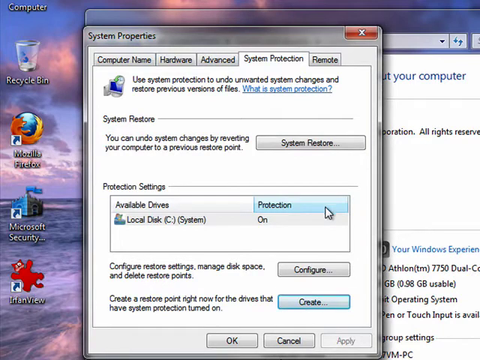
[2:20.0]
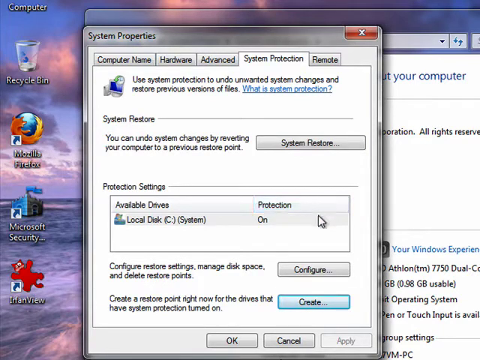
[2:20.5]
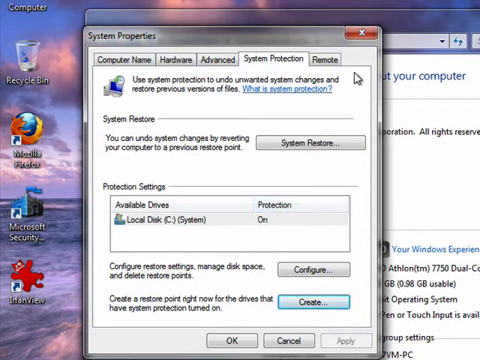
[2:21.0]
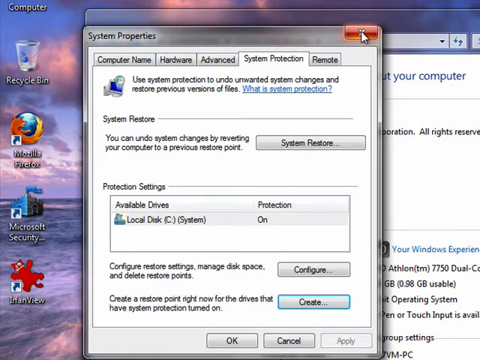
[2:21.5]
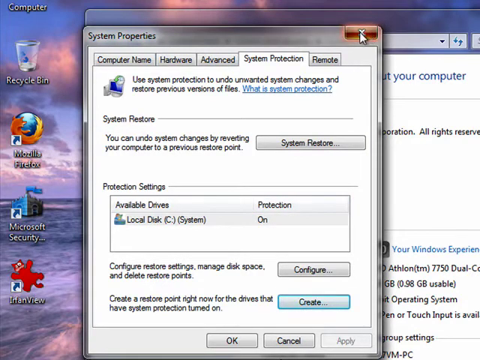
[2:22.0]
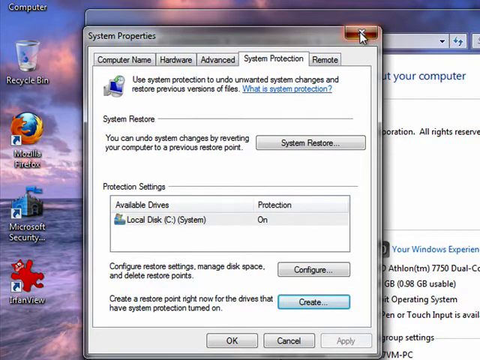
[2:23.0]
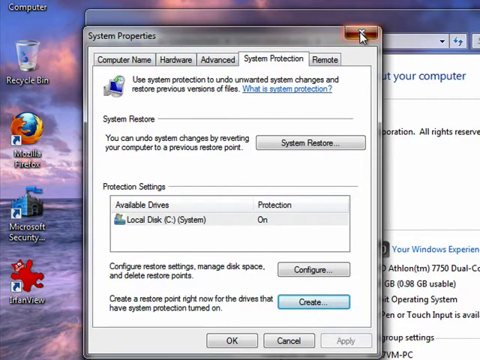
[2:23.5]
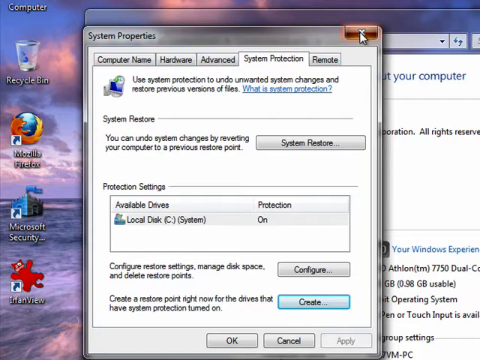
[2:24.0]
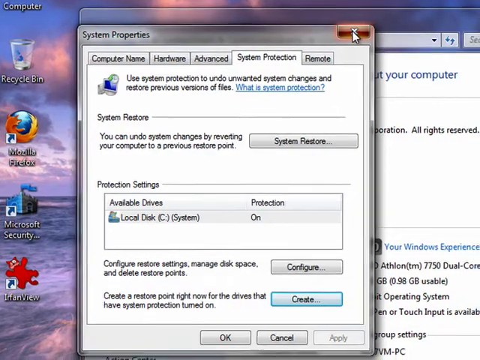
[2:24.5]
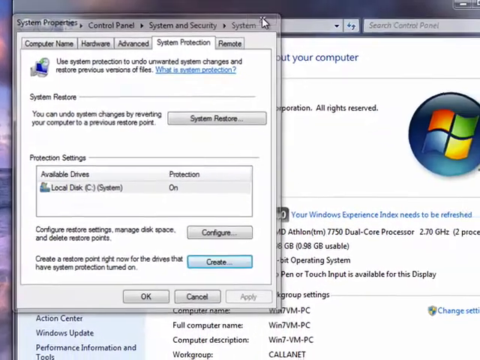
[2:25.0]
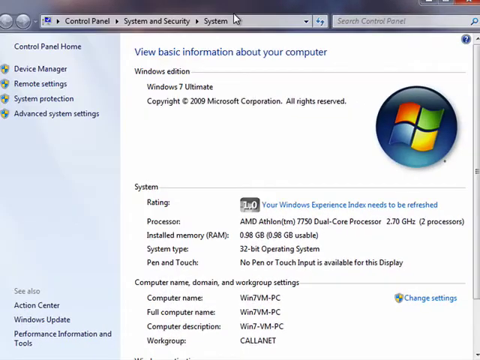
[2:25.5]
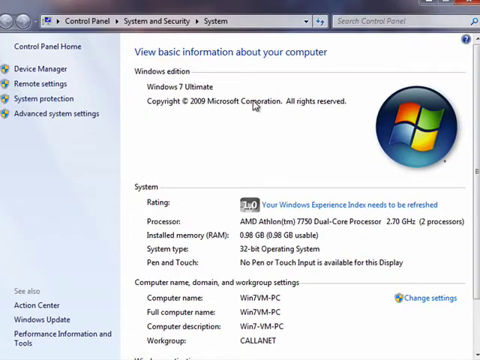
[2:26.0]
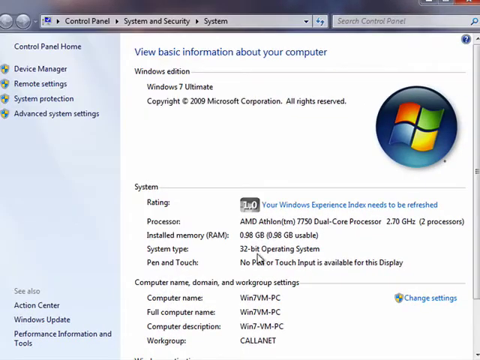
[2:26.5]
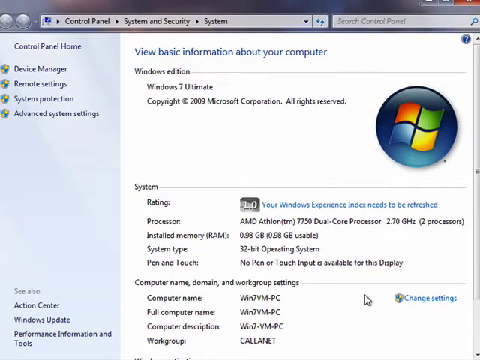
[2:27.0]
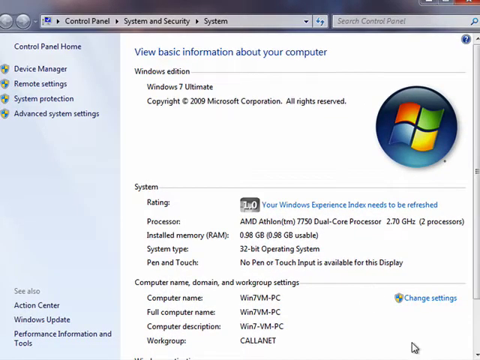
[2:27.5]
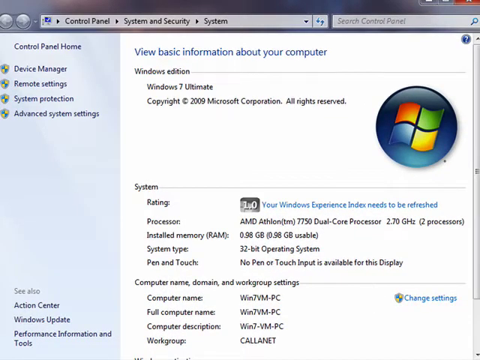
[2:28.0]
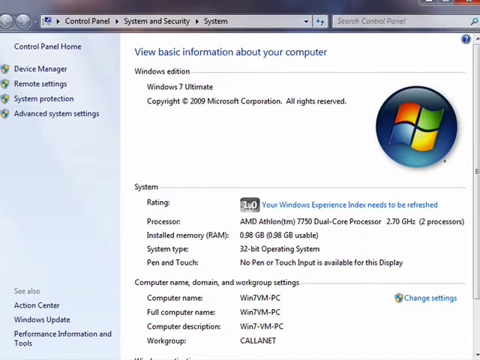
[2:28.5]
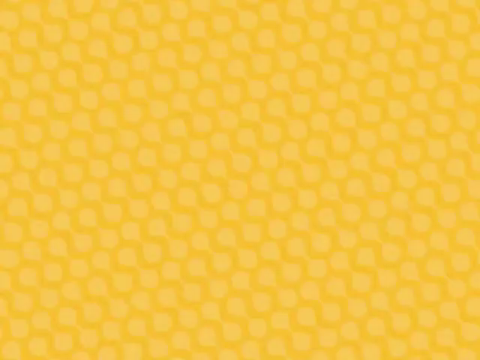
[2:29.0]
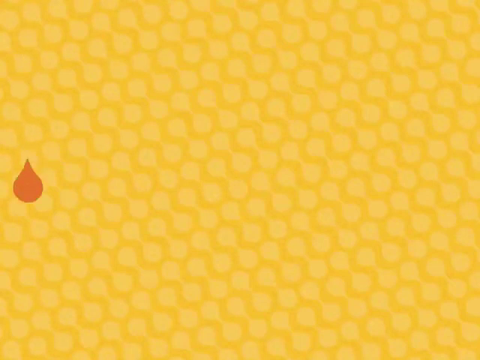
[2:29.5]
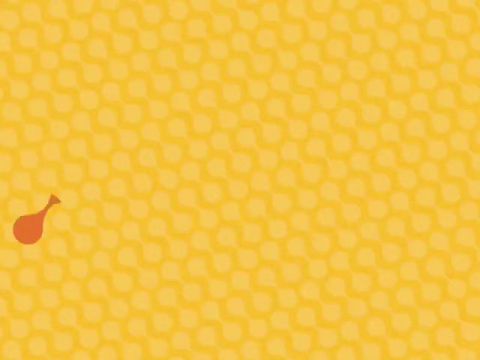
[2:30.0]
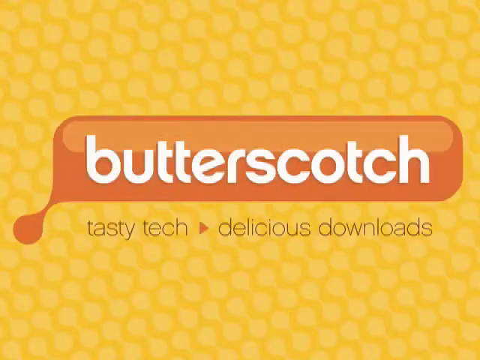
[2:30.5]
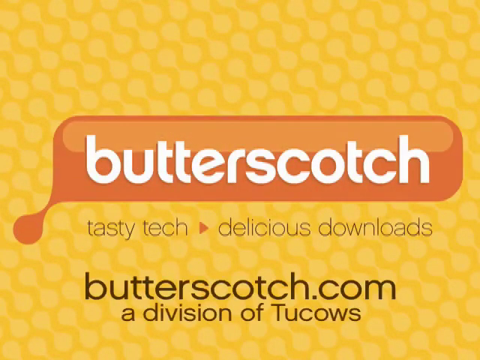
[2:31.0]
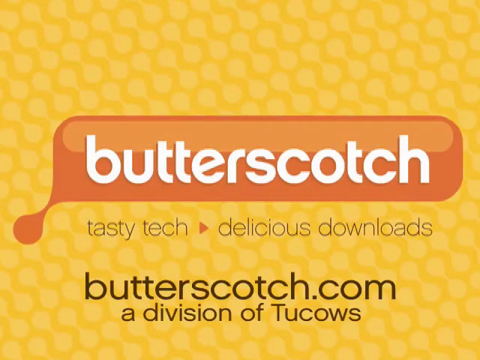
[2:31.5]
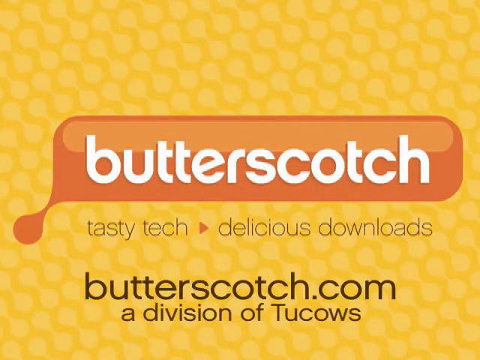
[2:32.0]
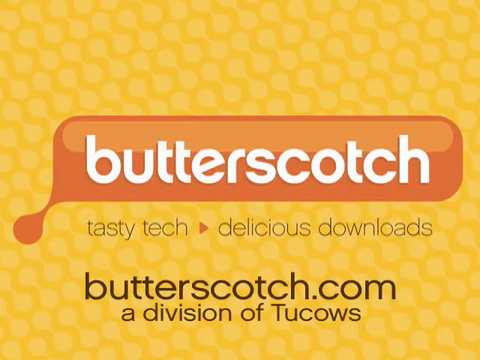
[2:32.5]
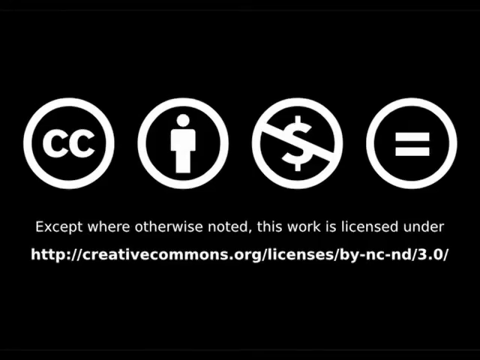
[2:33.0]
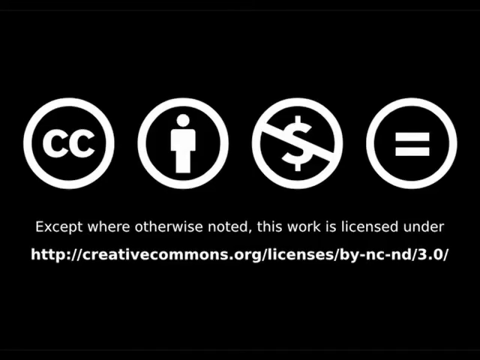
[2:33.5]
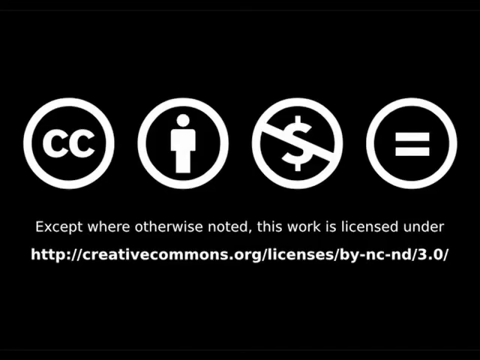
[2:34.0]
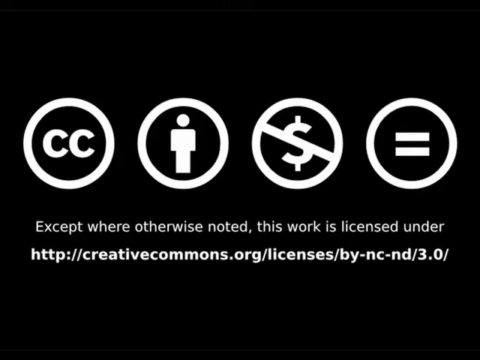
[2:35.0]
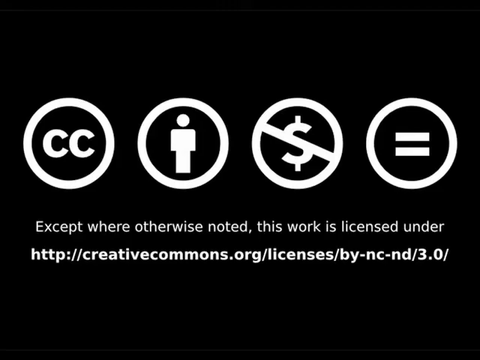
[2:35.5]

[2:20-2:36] Under the system protection option there are various options. Text reads "butterscotch, tasty tag, delicious downloads, butterscotch.com," followed by "except for otherwise noted, this work is licensed under" and a URL shown on the screen. In the system properties window, the system protection area offers to undo unwanted system changes and restore previous versions of files. The person has the option to choose system restore, and under it a specific local disk, which shows that protection is on.